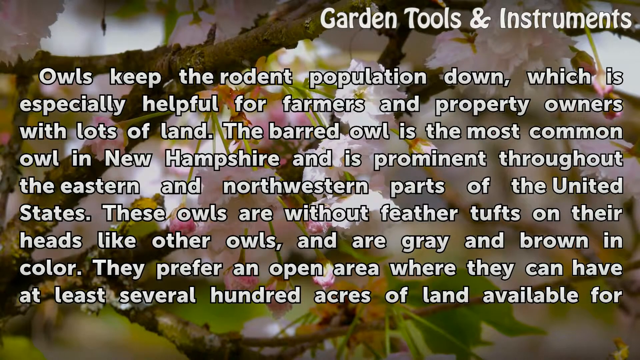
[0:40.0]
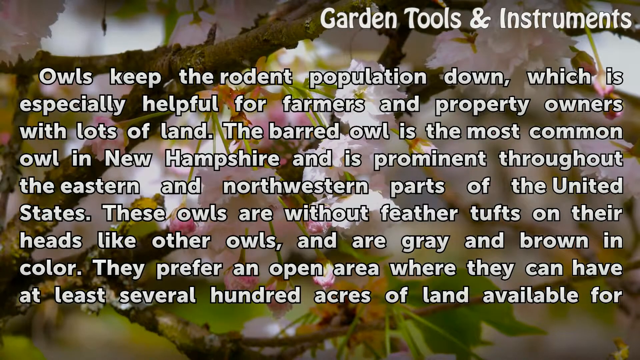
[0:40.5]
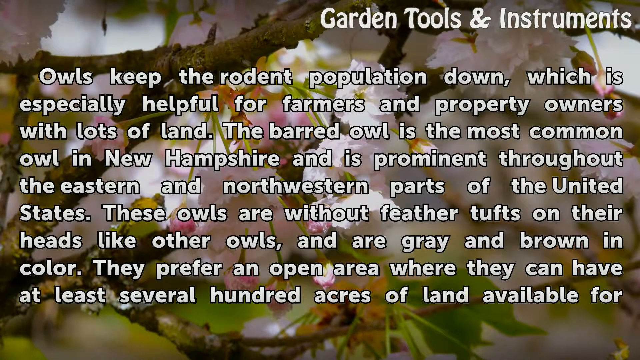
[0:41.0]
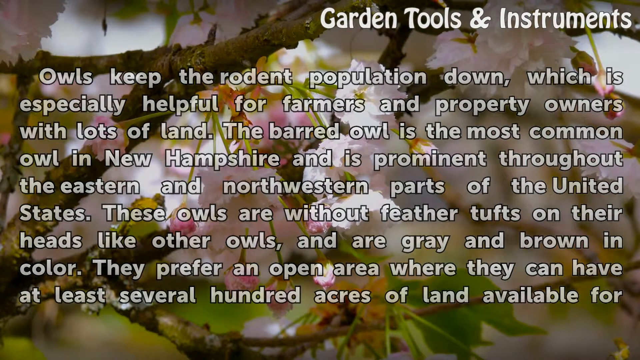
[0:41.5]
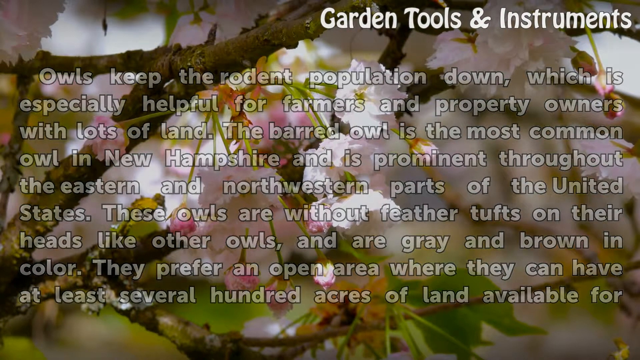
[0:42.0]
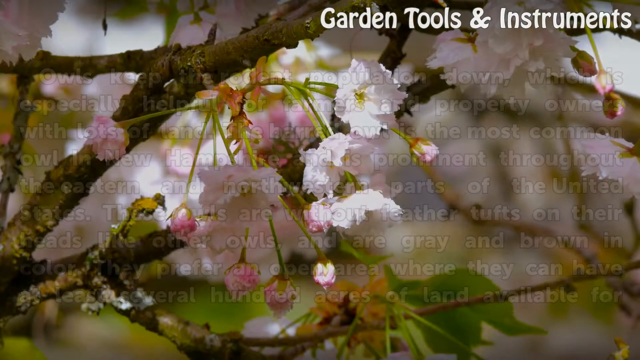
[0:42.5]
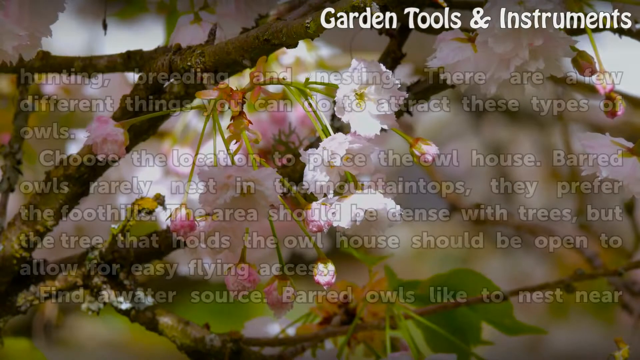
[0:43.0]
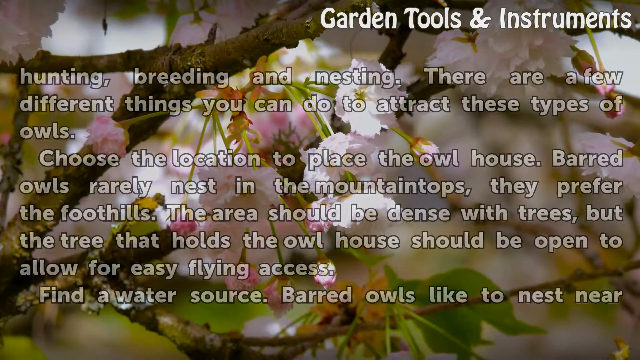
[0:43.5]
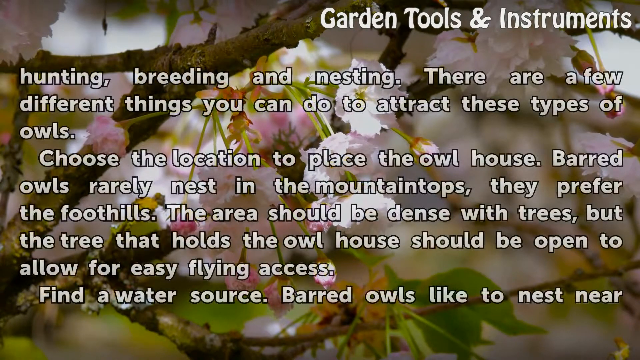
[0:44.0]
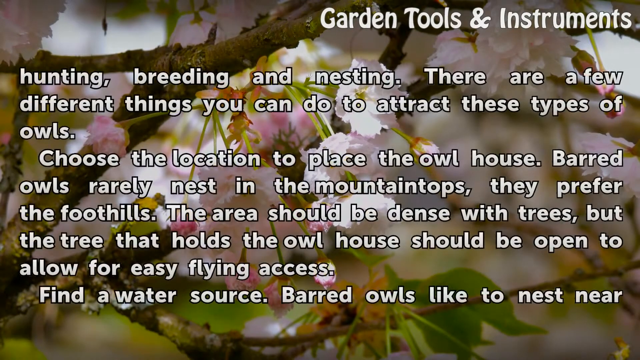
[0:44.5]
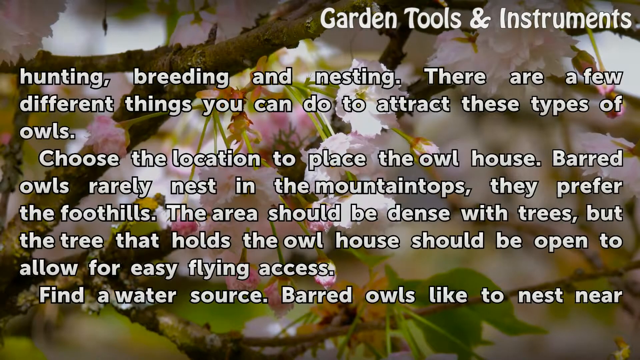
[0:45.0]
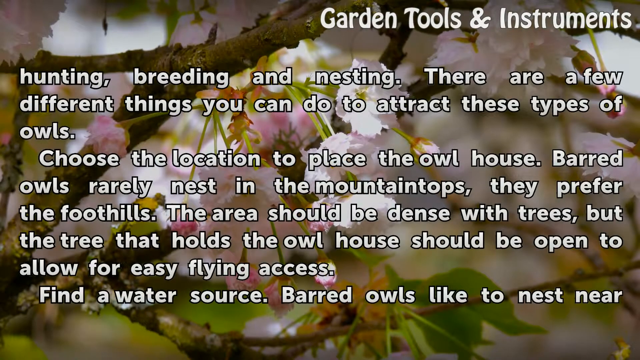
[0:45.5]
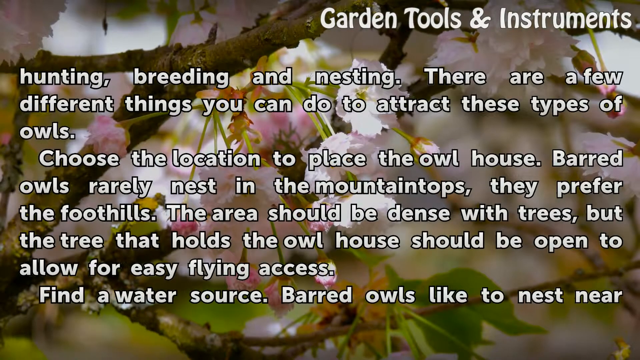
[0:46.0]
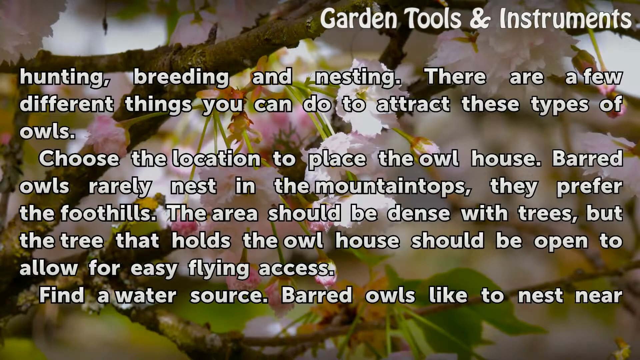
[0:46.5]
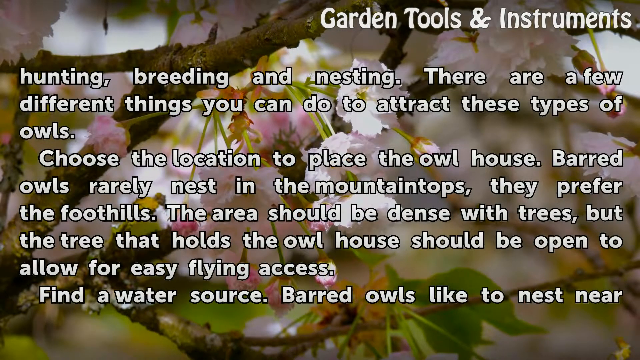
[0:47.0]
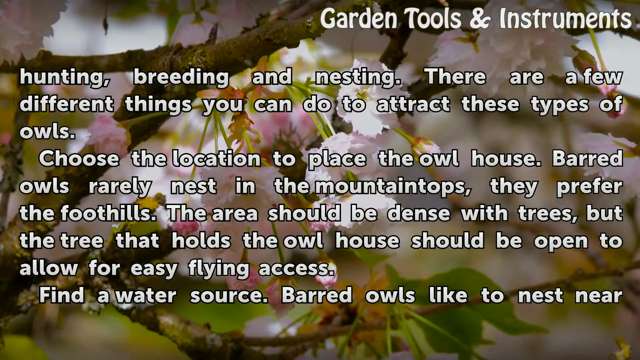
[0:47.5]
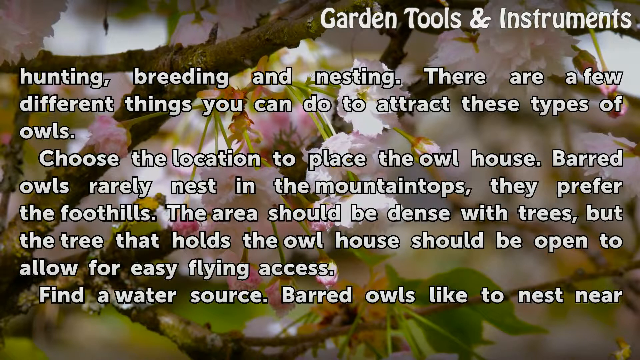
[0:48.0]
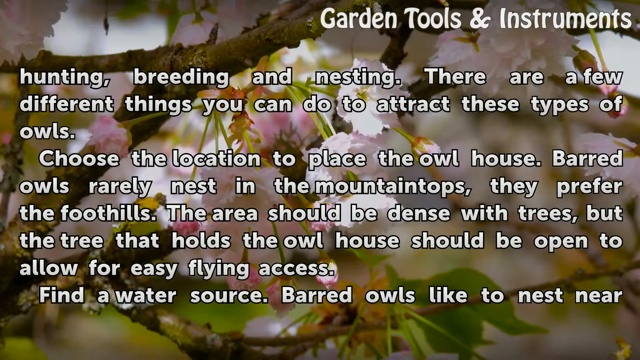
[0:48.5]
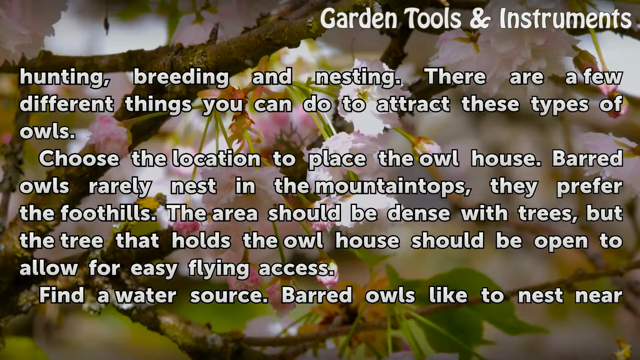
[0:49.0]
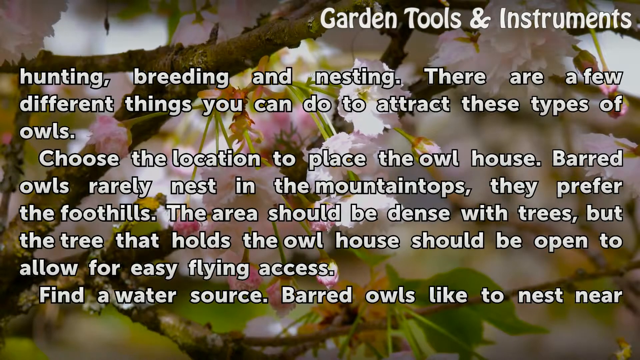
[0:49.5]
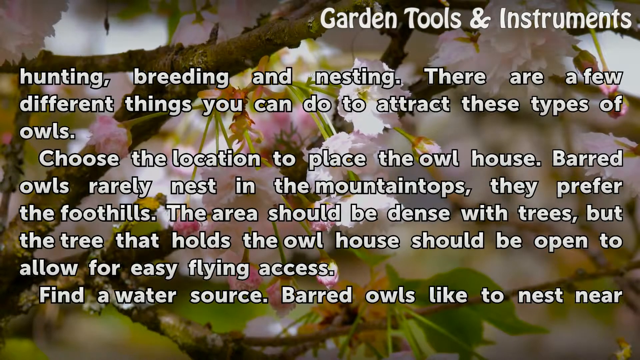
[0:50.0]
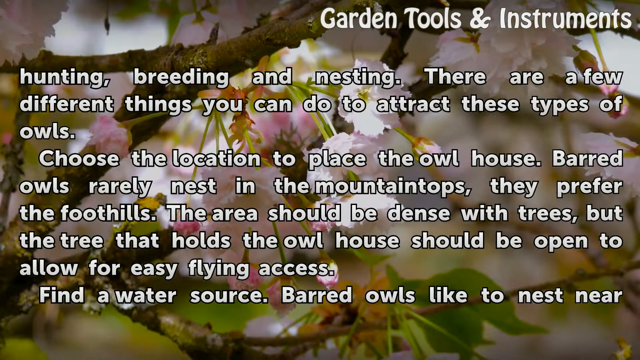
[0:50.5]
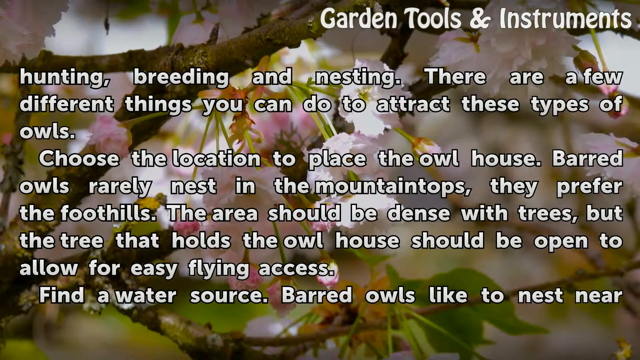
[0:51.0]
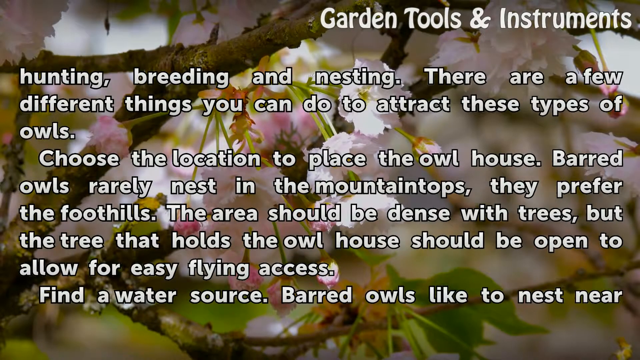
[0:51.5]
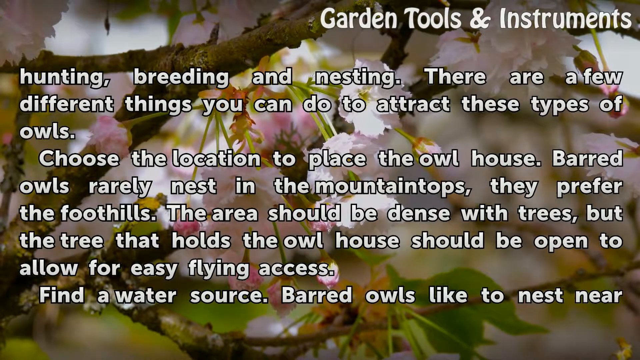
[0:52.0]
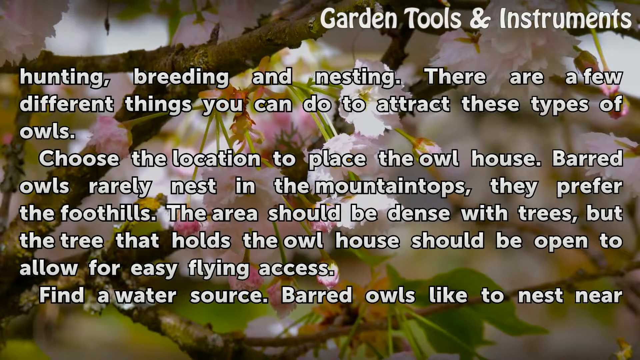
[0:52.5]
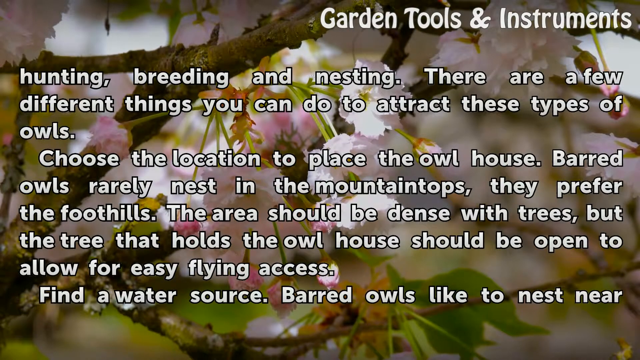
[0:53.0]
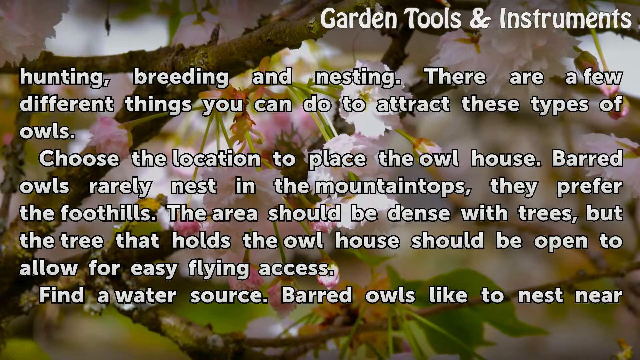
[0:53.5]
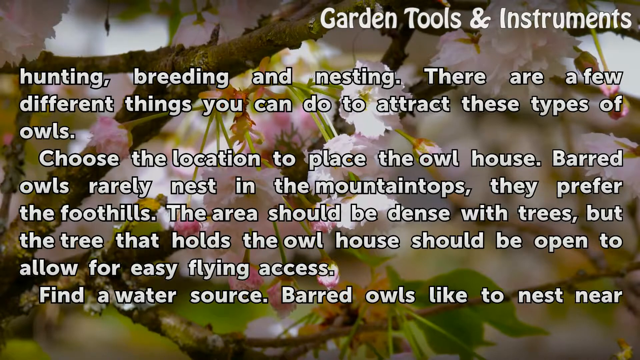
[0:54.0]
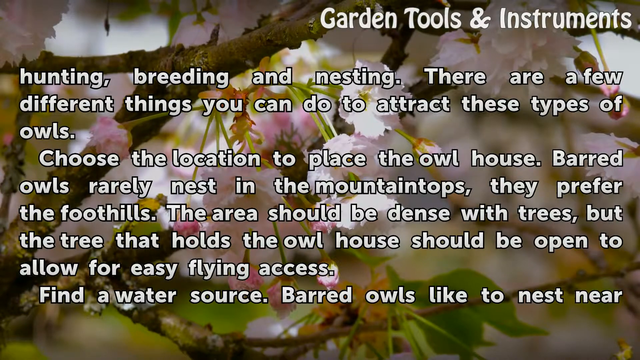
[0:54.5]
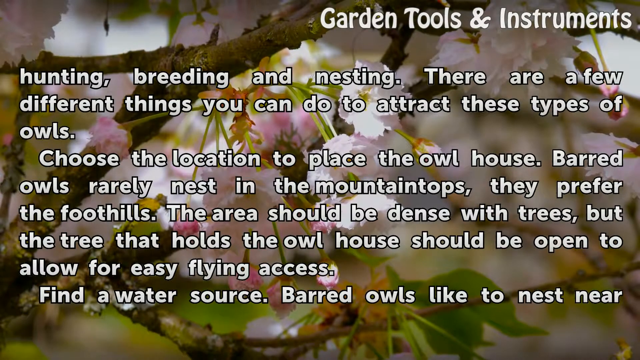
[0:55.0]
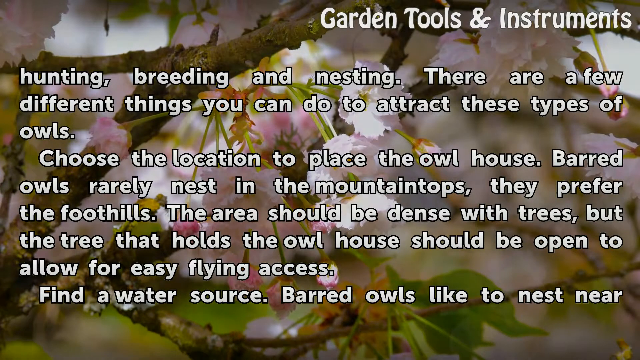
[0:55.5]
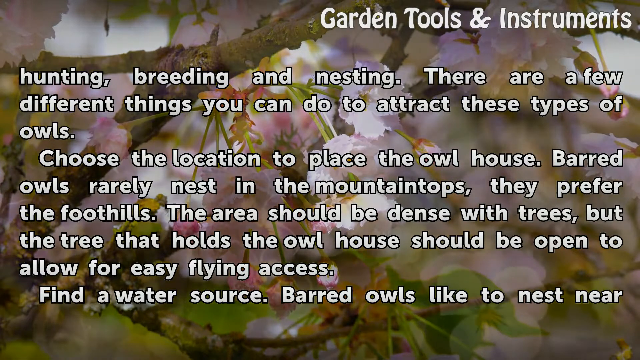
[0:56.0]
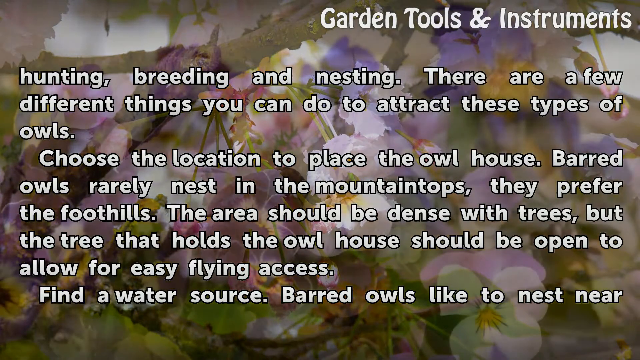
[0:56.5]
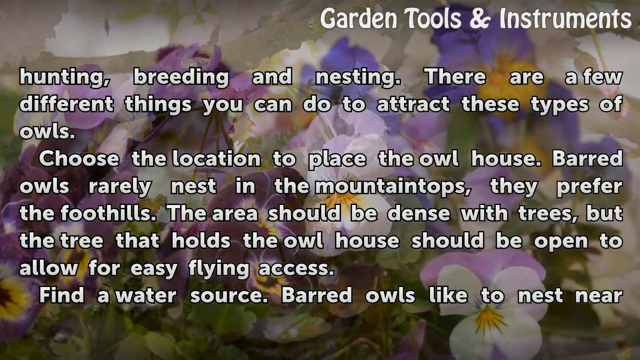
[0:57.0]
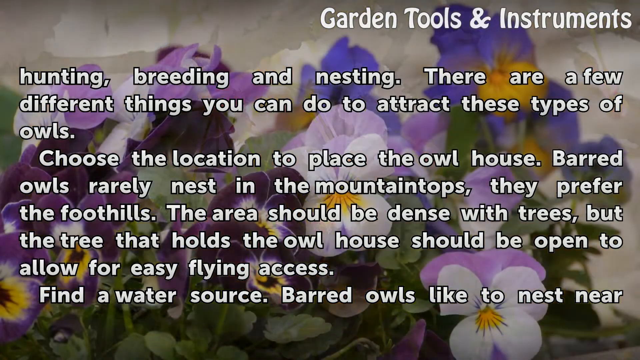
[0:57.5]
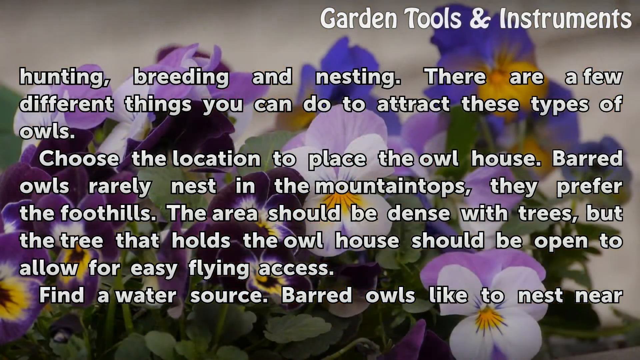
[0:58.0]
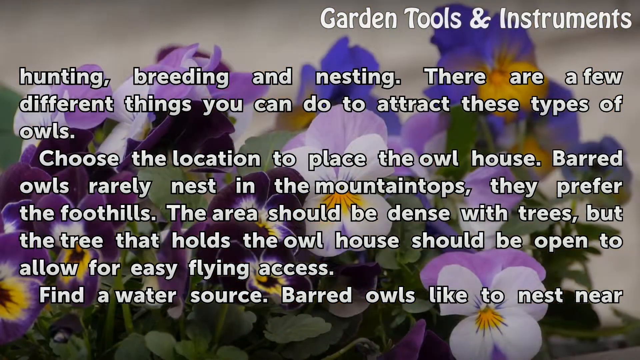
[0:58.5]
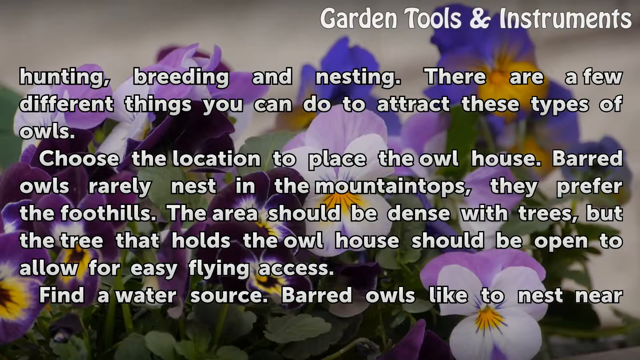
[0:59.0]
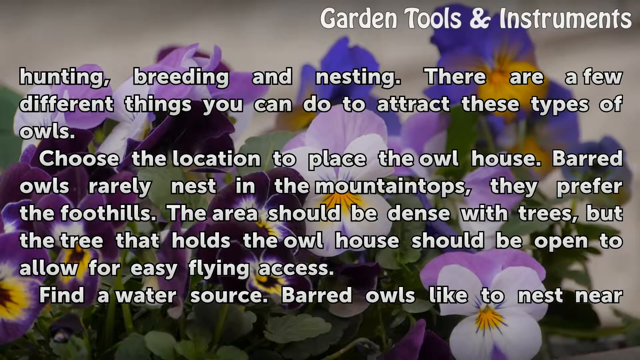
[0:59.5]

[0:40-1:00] The background shows a few thin brown branches with small light pink petaled flowers hanging from thin green stems. White text covering the screen reads: "Owls keep the rodent population down, which is especially helpful for farmers and property owners with lots of land. The barred owl is the most common owl in New Hampshire and is prominent throughout the Eastern and Northwestern parts of the United States. These owls are without feather tufts on their heads like other owls and are grey and brown in color. They prefer an open area where they can have at least several hundred acres of land available for hunting, breeding and nesting. There are a few different things you can do to attract these types of owls. Choose the location to place the owl house. Barred owls rarely nest in the mountaintops, they prefer the foothills. The area should be dense with trees, but the tree that holds the owl house should be open to allow for easy flying access. Find the water source. Barred owls like to nest near" The background then changes to a close-up image of small flowers with petals in different shades of purple: some darker purple flowers with white and yellow centers, and more lavender and light pinkish-purple flowers with yellow centers, with small green leaves underneath.